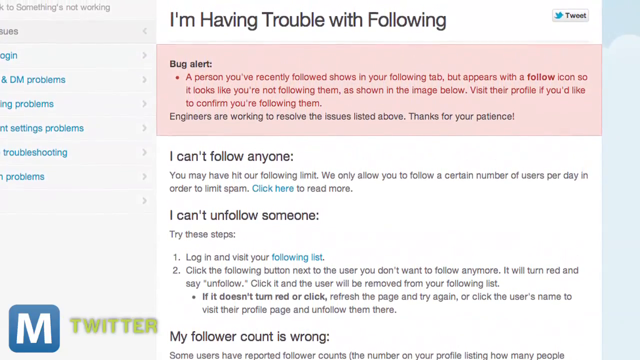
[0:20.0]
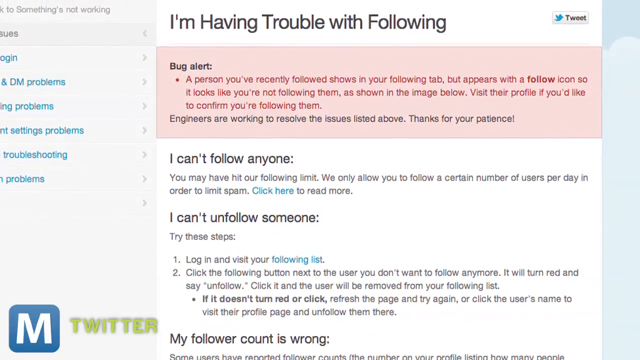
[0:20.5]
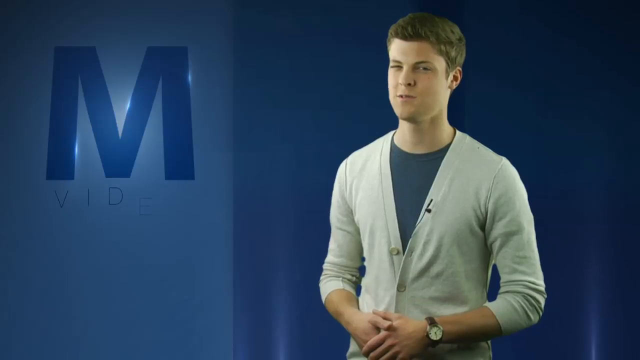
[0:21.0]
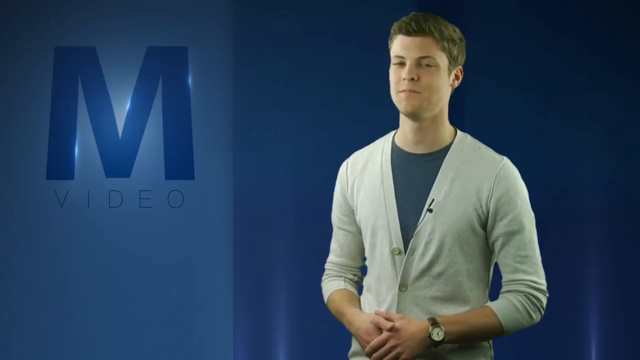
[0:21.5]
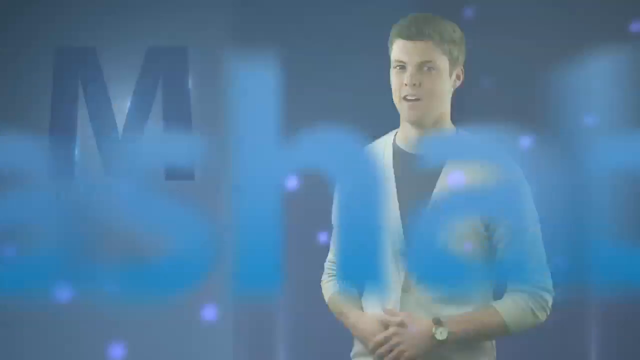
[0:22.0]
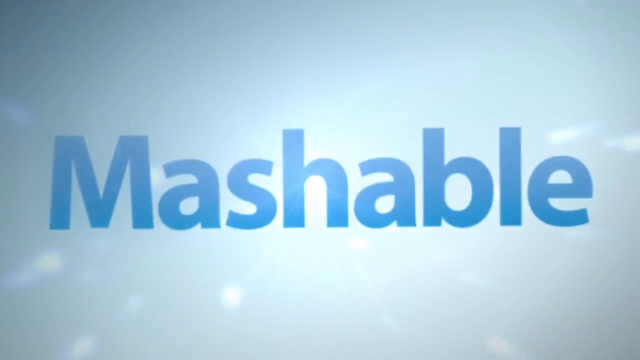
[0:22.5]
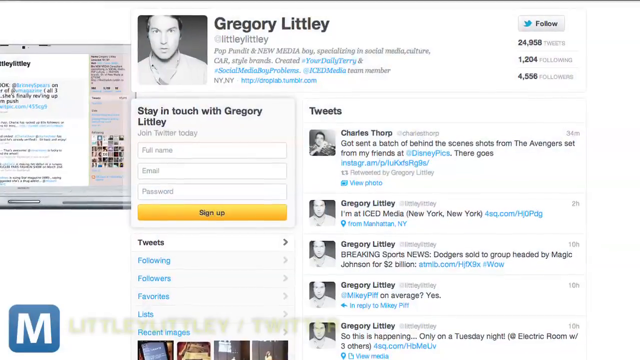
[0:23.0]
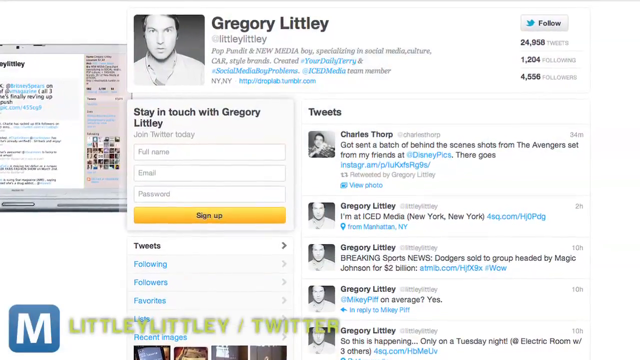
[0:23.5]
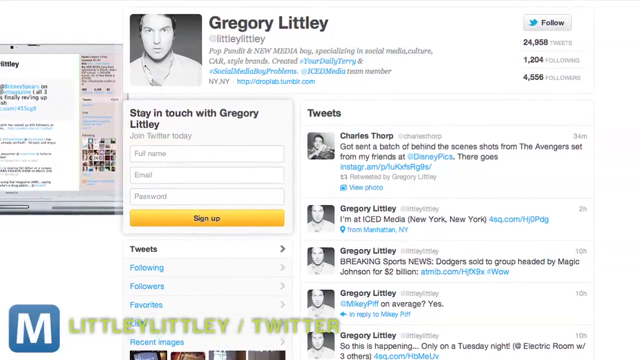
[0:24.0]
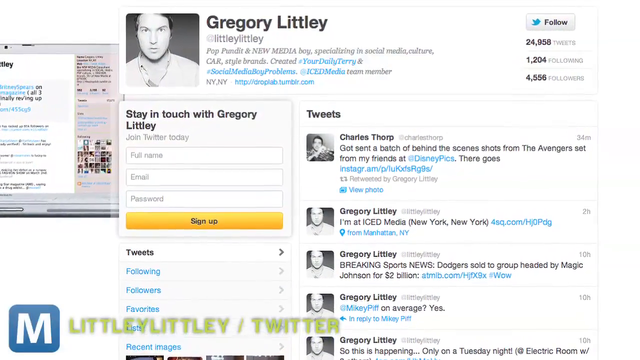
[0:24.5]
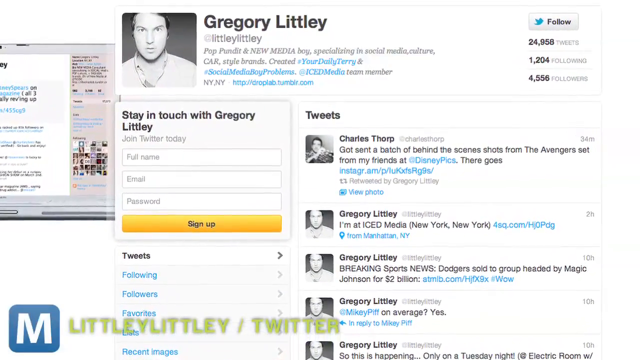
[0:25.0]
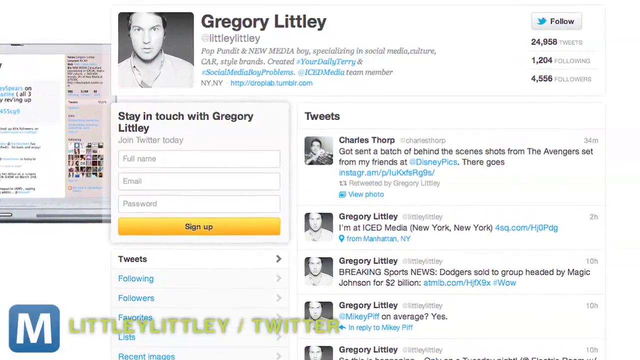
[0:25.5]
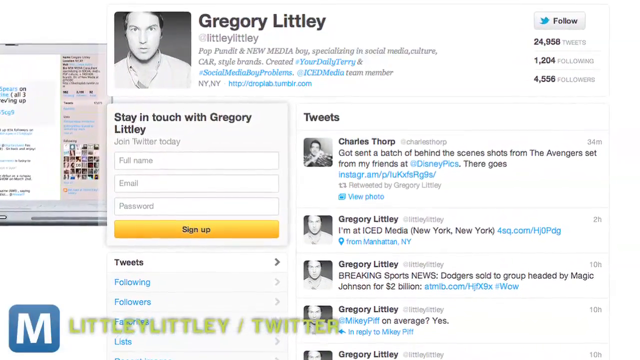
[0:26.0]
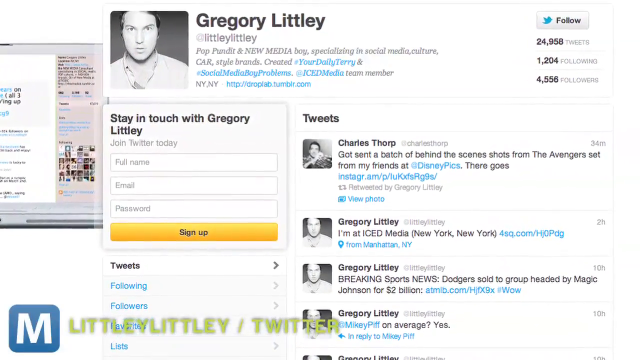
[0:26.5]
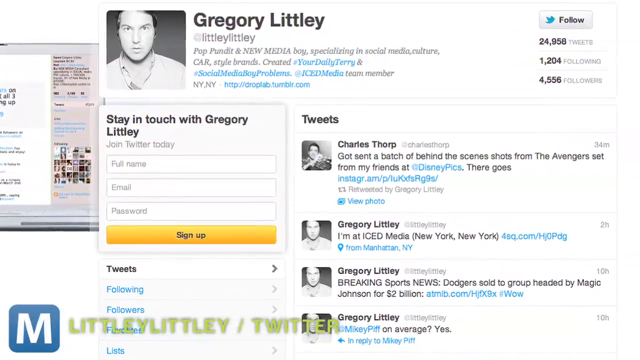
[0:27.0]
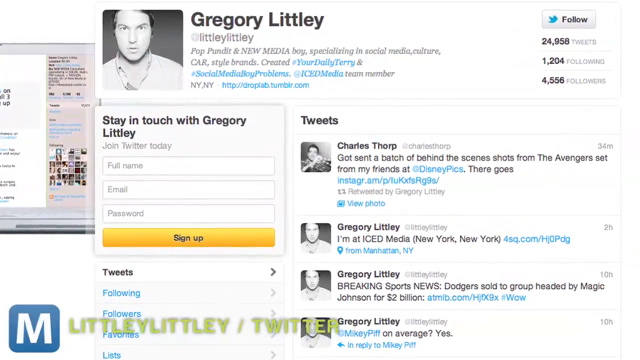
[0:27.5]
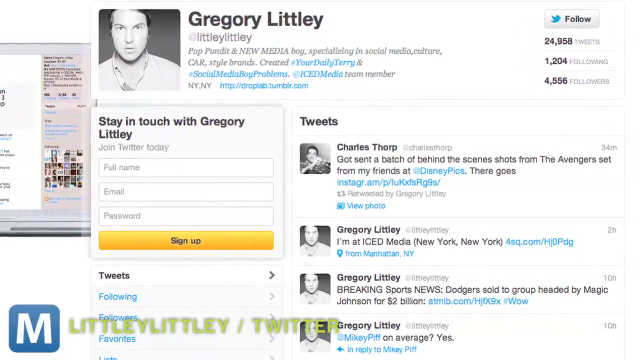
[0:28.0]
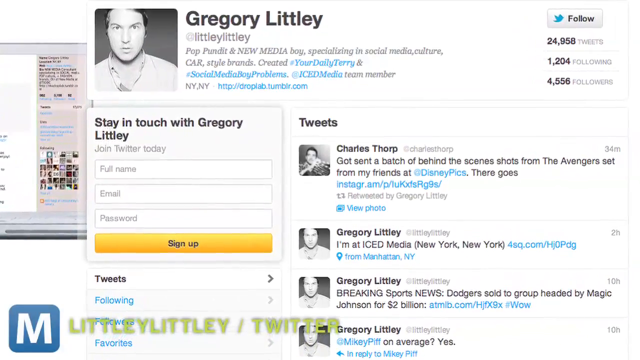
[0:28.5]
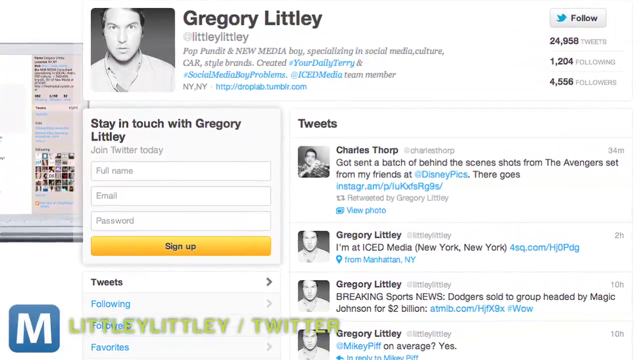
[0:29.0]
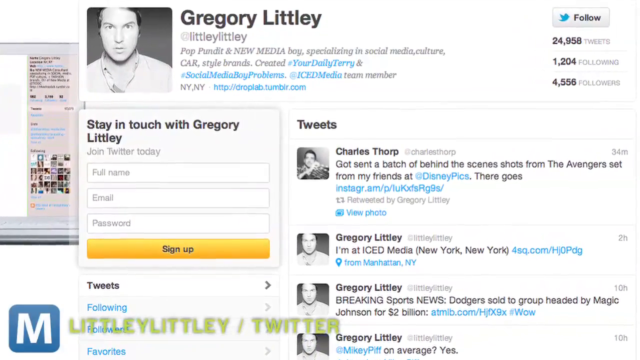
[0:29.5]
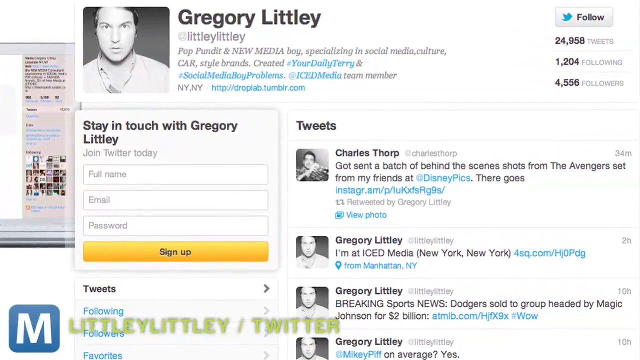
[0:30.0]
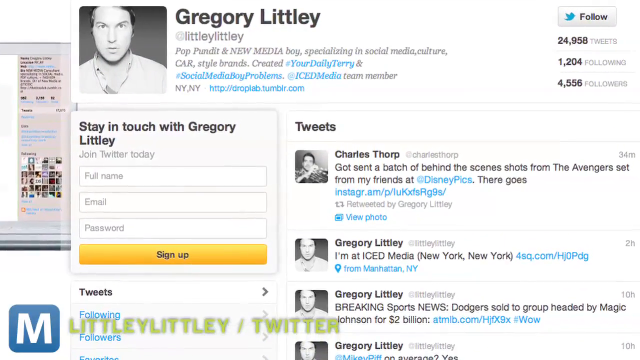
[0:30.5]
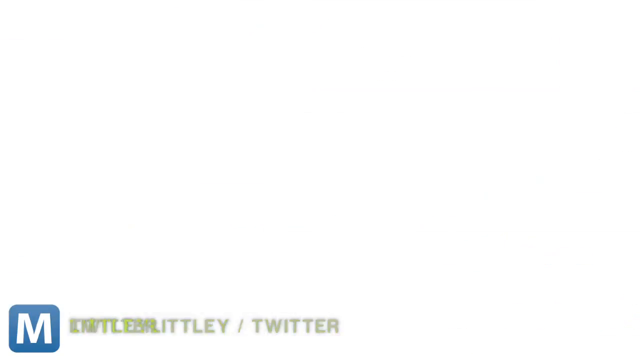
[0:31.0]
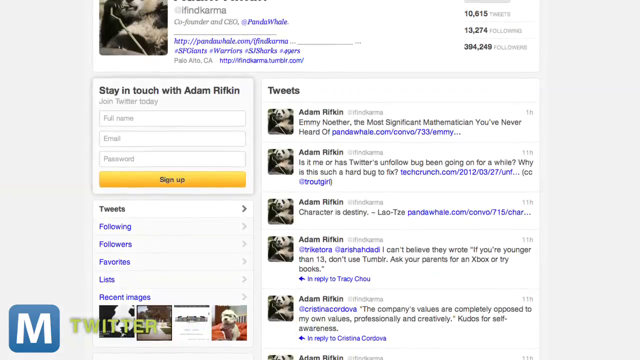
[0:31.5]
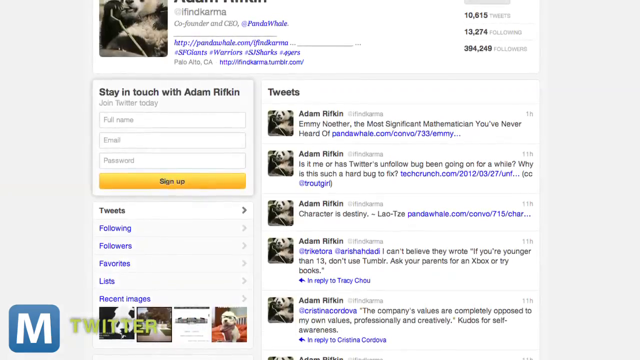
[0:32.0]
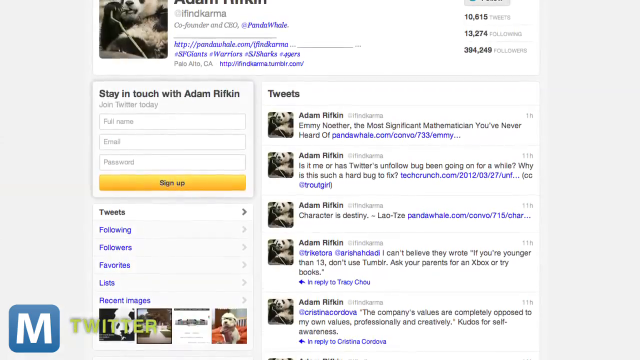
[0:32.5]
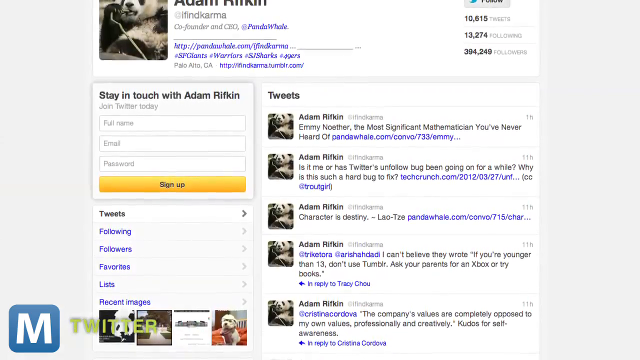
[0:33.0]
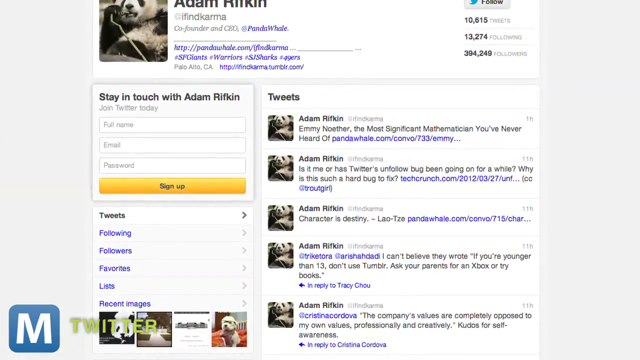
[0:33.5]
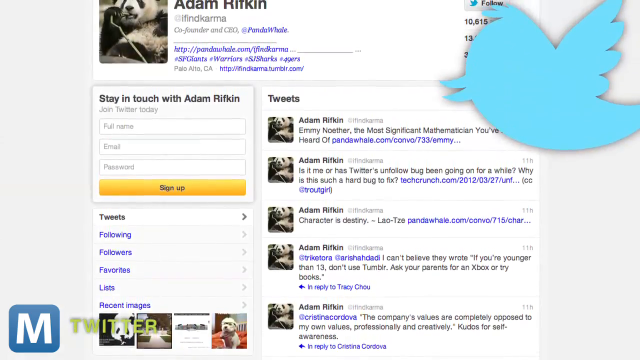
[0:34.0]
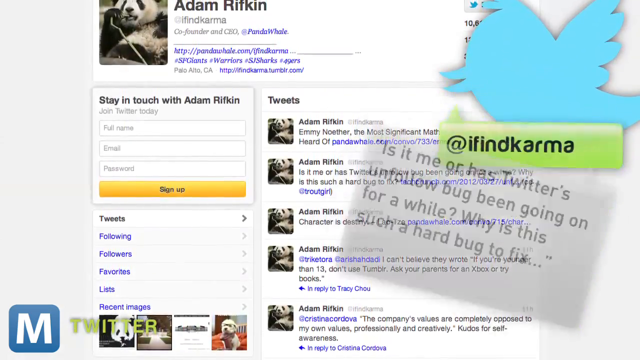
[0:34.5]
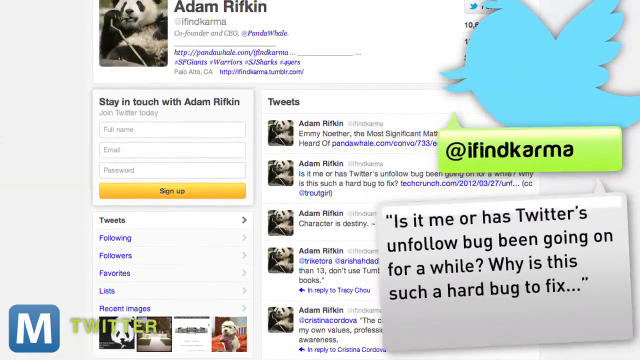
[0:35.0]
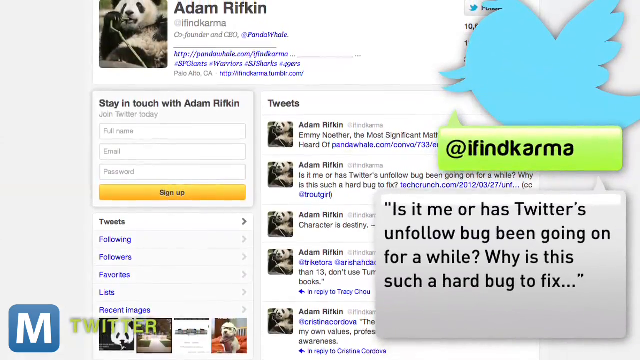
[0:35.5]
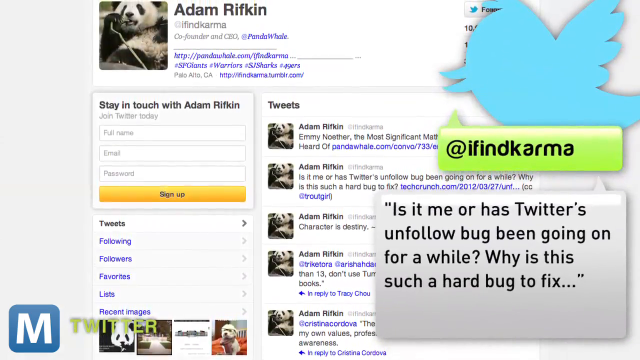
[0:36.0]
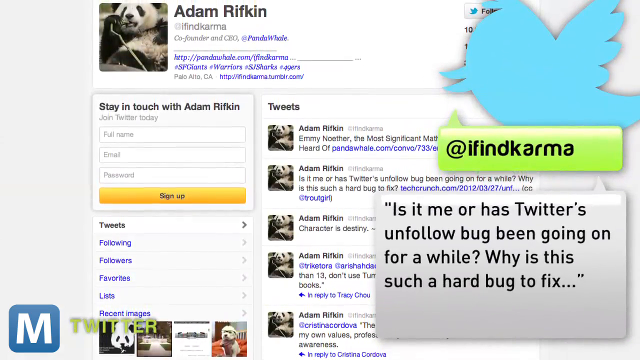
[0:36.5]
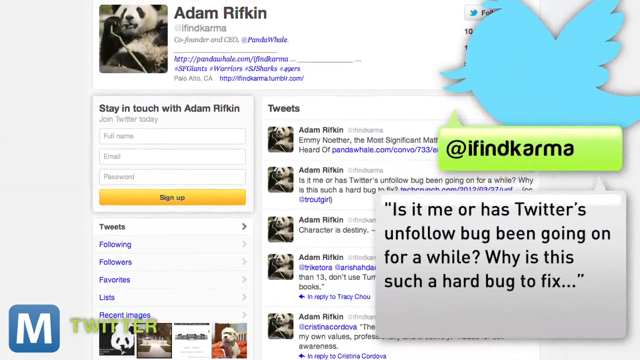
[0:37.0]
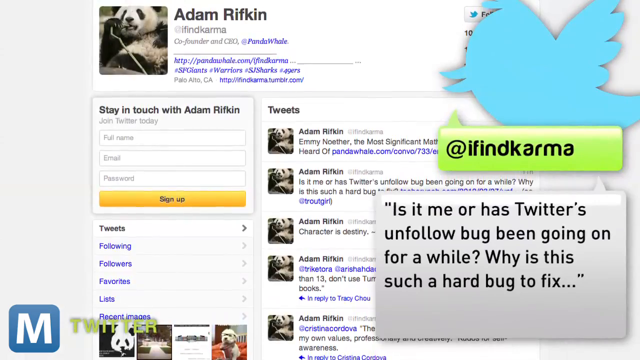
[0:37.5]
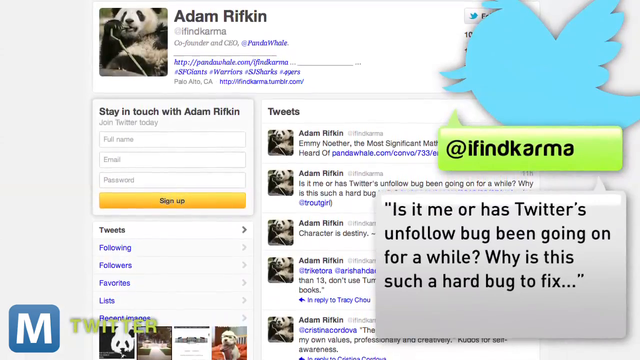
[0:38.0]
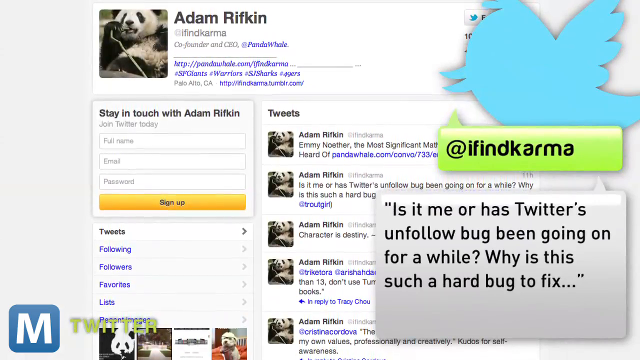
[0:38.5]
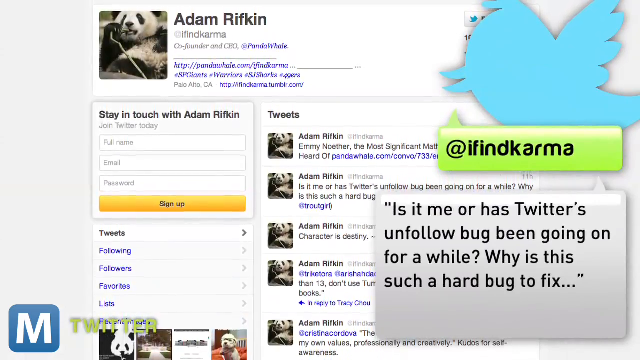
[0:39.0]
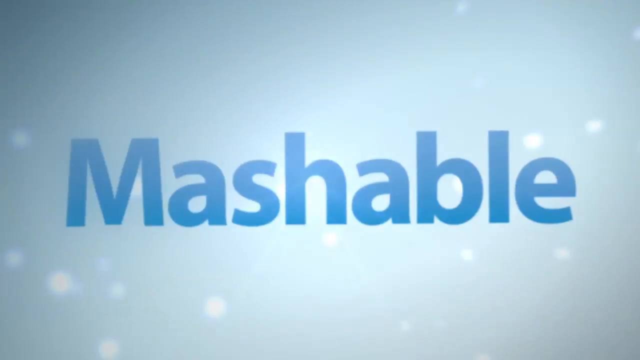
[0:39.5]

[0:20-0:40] A profile called Gregory Littley is shown in connection with the bug in Twitter.